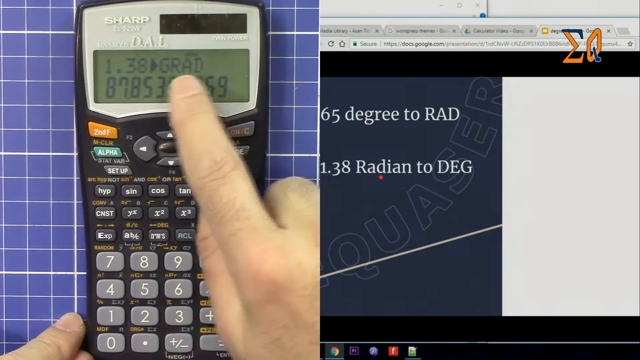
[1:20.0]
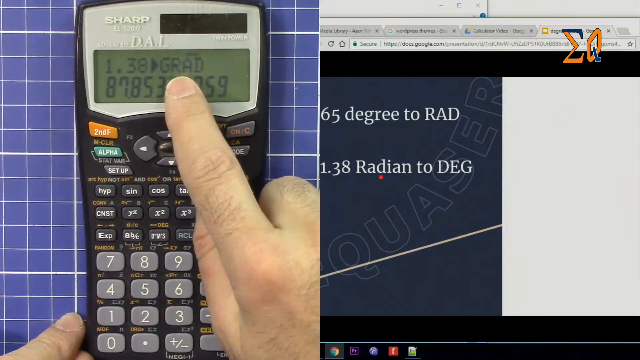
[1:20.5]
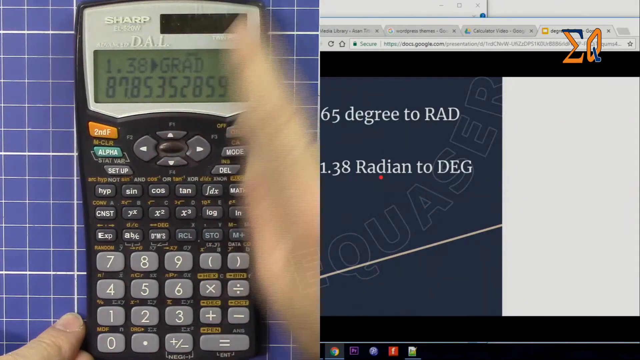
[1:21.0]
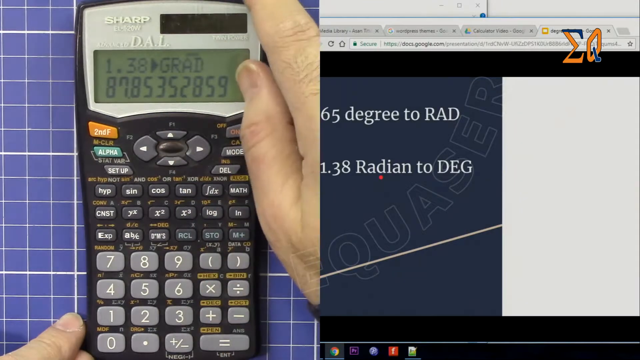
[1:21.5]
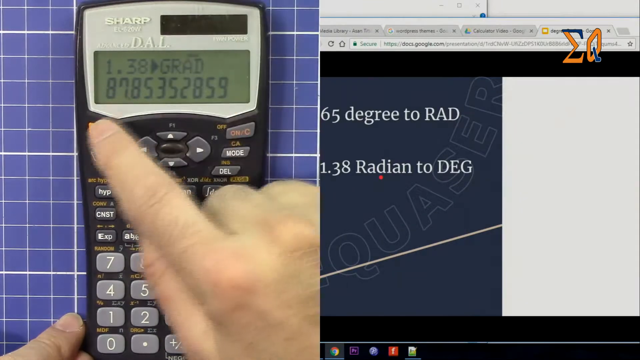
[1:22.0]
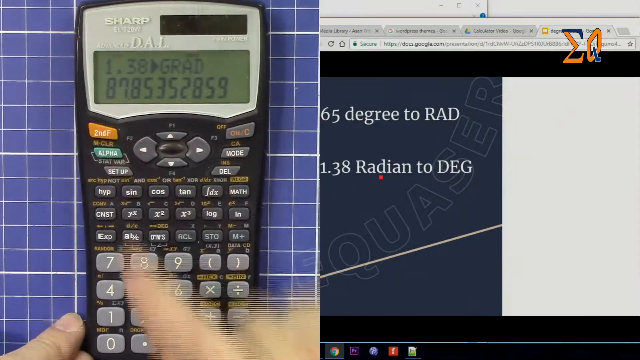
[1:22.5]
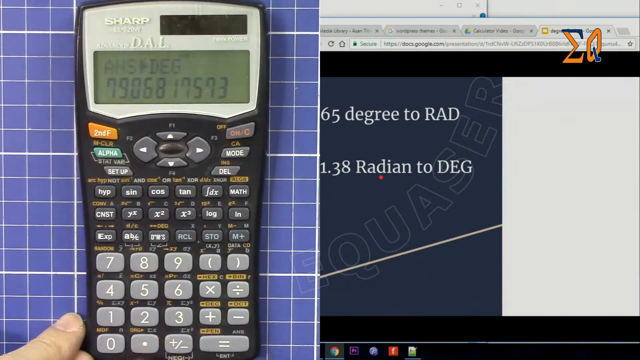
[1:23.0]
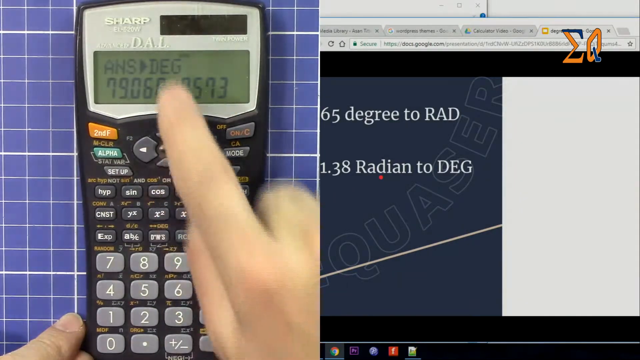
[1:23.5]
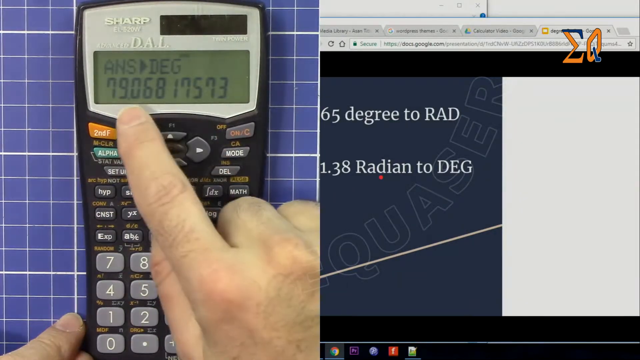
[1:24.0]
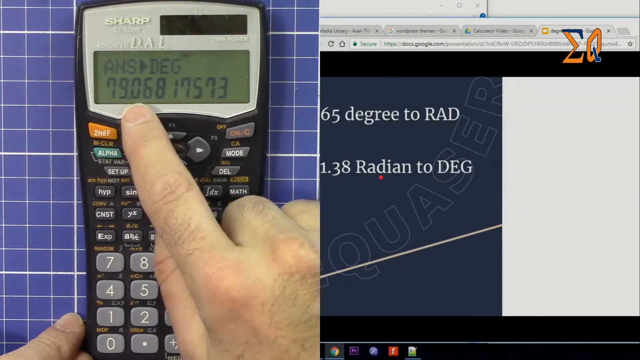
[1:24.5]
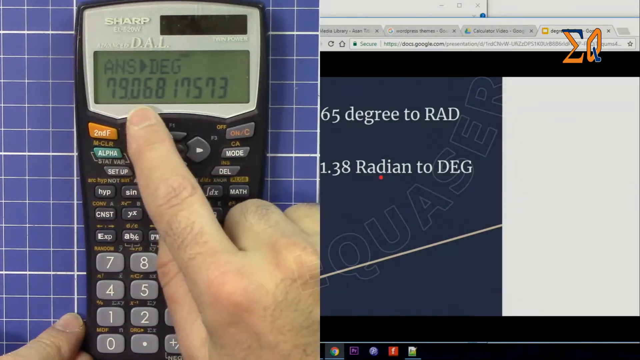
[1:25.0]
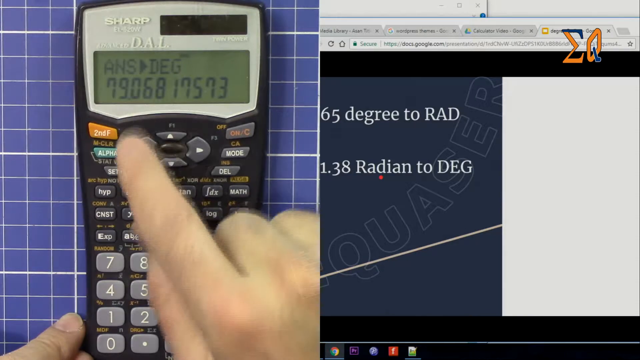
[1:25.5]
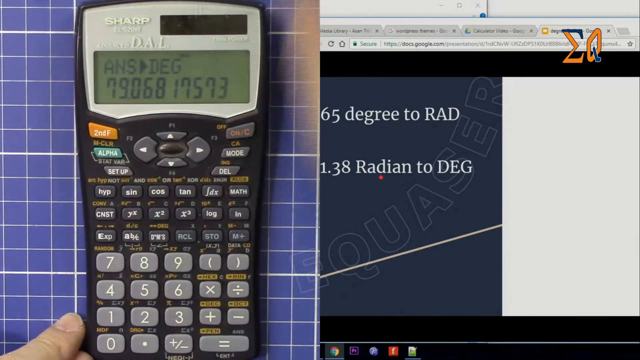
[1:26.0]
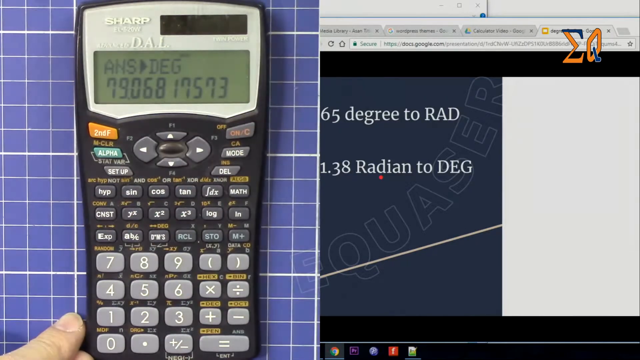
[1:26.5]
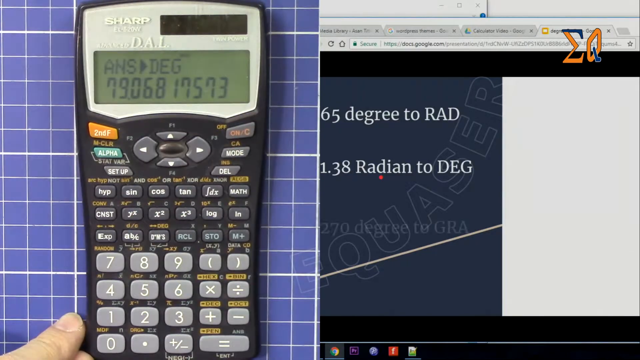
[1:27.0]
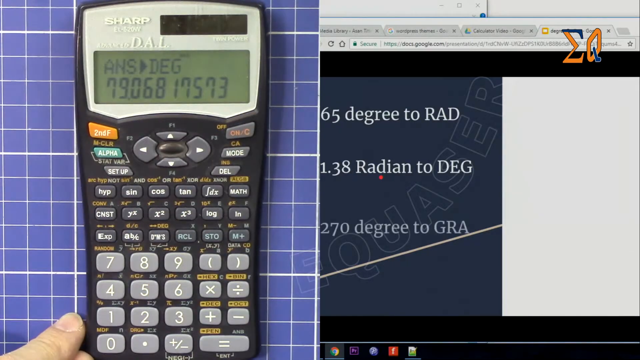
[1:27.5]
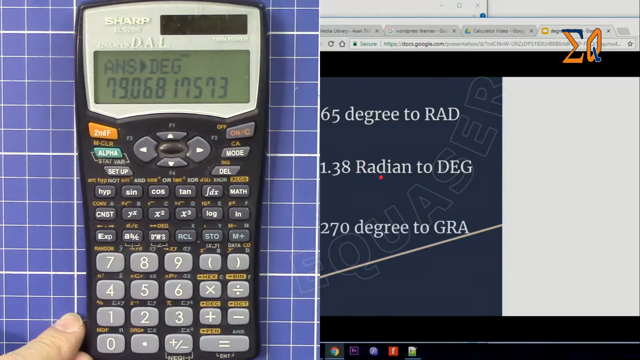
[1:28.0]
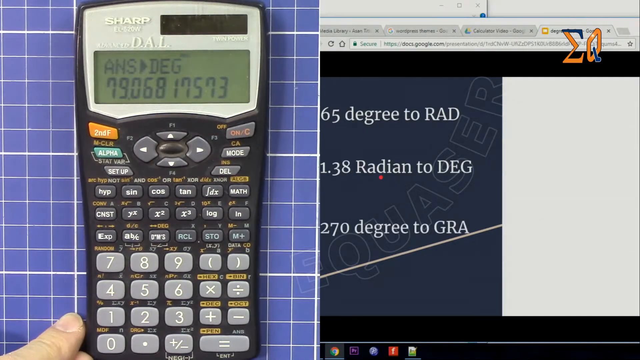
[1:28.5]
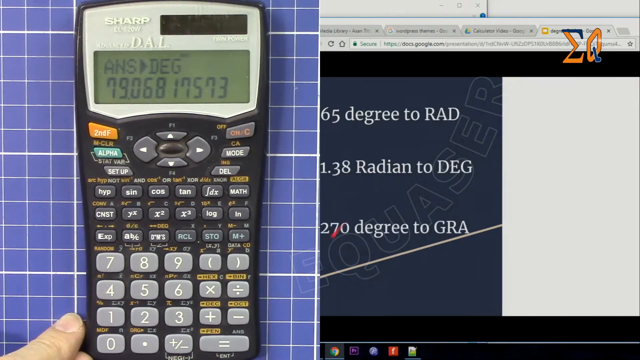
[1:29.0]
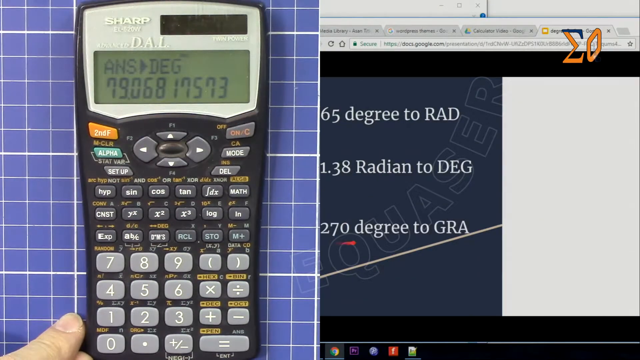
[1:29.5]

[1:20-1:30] The top of the screen reads "1.38" with the arrow pointing over to "GRAD", and underneath is "8785352859". A finger of the right hand goes up and points at it, touches the top right corner, then hits the orange button again, which changes the display to "ANS" with the arrow pointing to "DEG" and the number "706817573" underneath. The pointer finger comes in pointing at it again, then goes up to the right off the screen. On the right side in the dark blue, below "1.38 radian to DEG", it says "270 degree to GRA". The little red pointer points at it and moves back and forth a little.